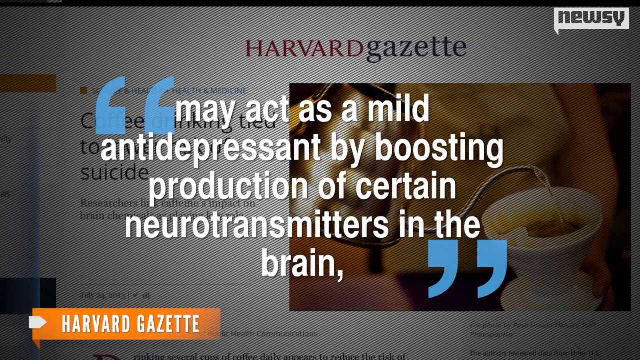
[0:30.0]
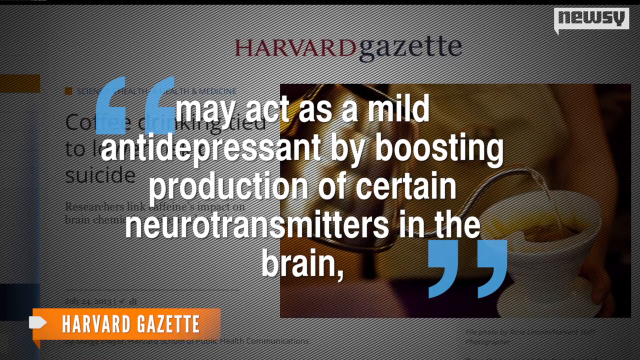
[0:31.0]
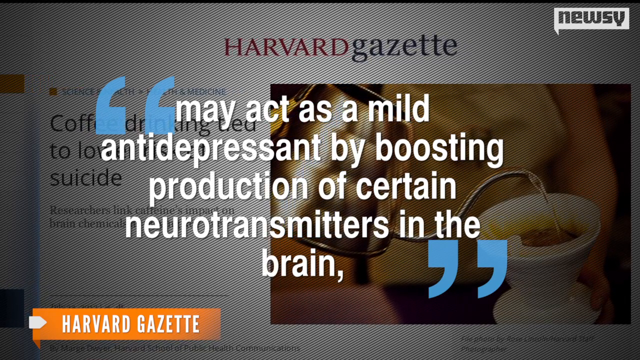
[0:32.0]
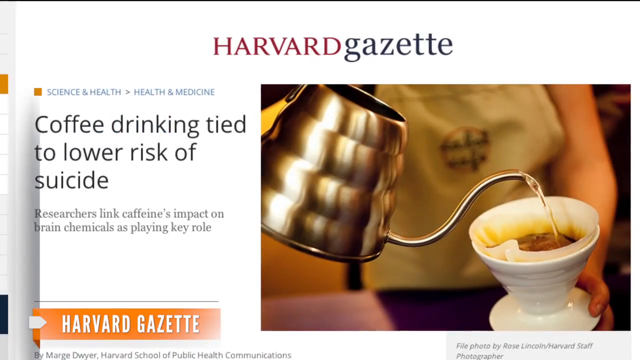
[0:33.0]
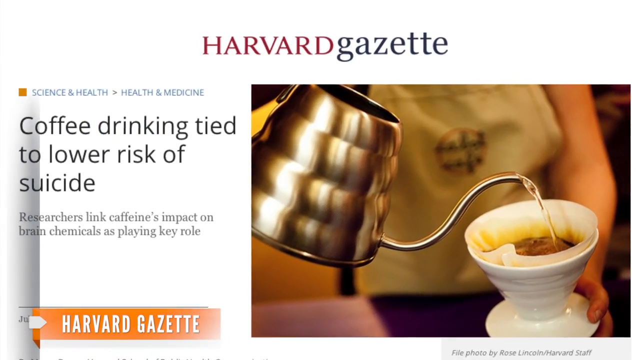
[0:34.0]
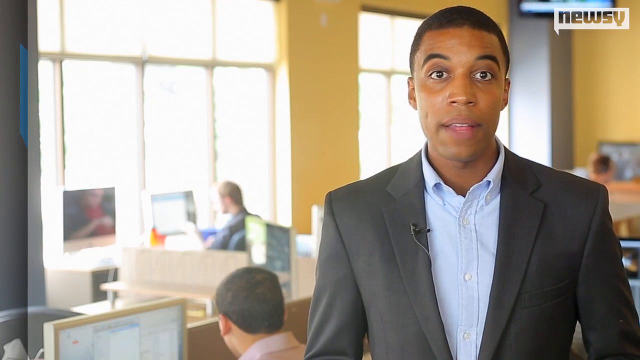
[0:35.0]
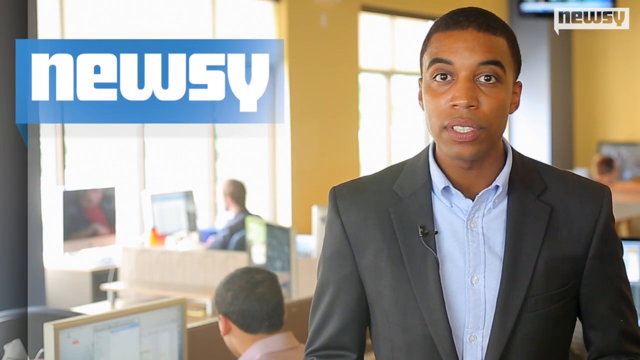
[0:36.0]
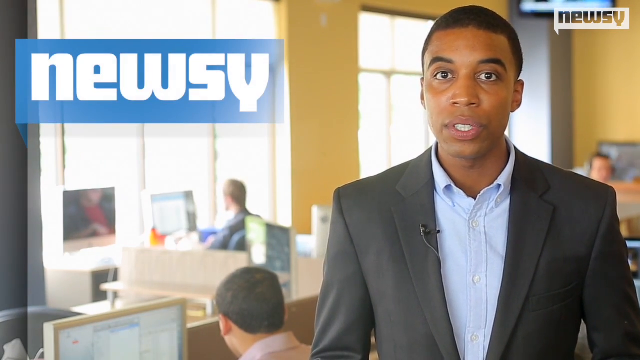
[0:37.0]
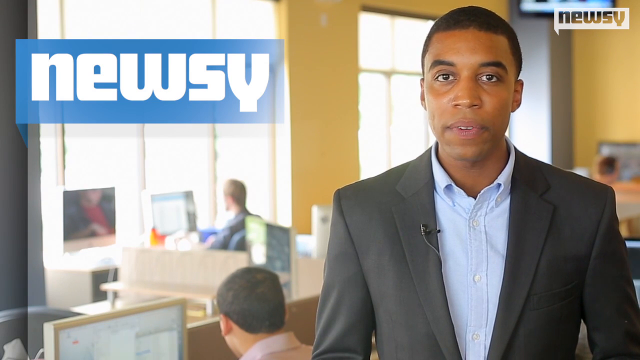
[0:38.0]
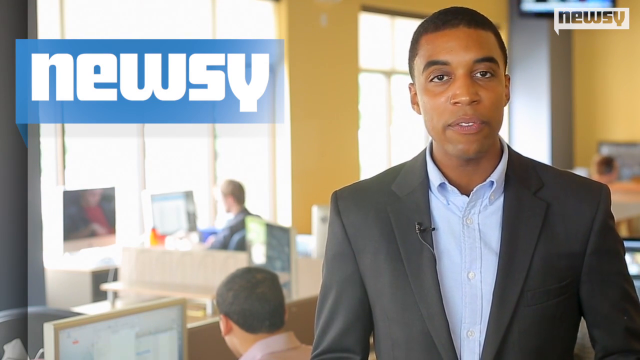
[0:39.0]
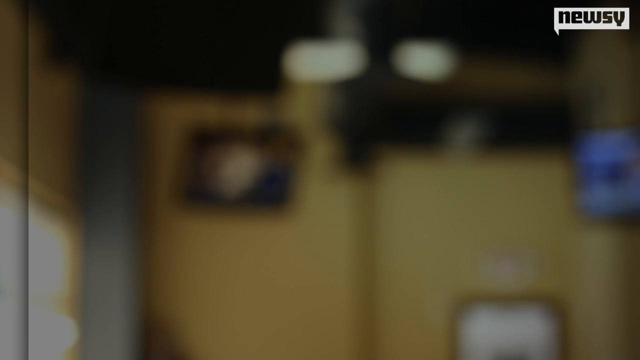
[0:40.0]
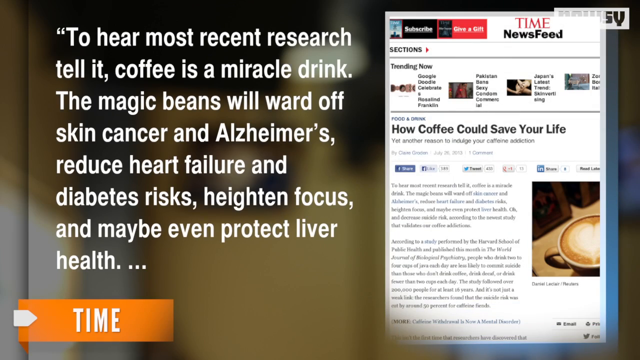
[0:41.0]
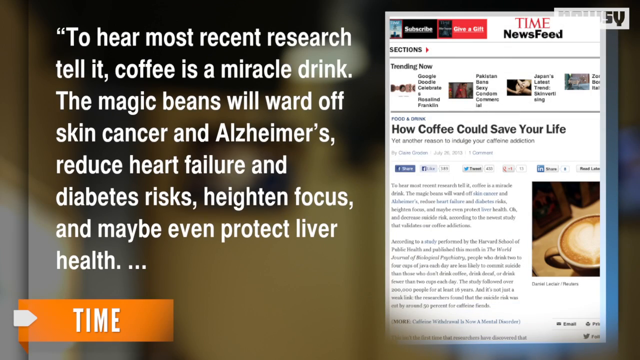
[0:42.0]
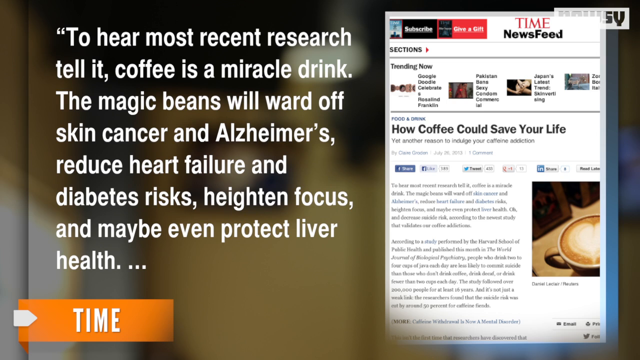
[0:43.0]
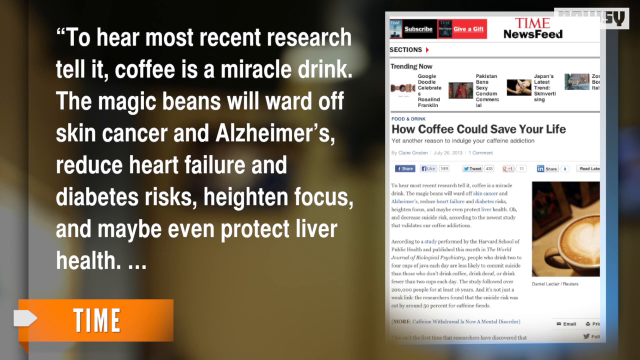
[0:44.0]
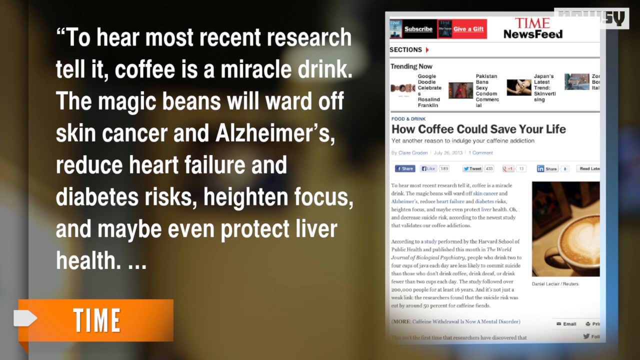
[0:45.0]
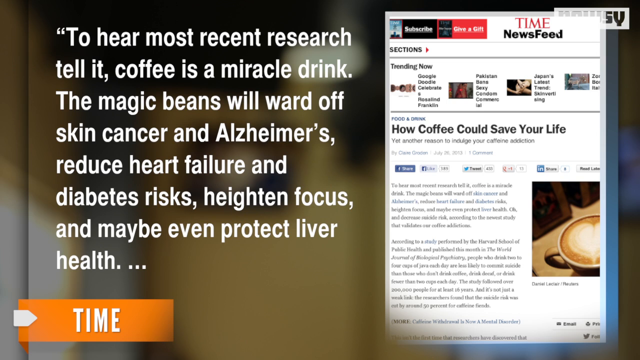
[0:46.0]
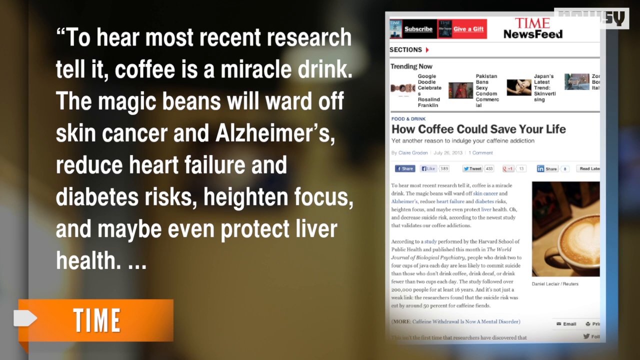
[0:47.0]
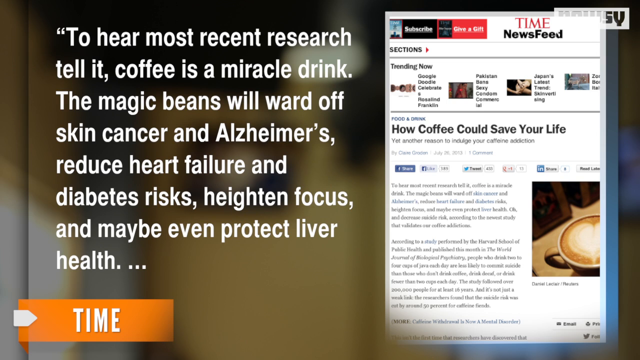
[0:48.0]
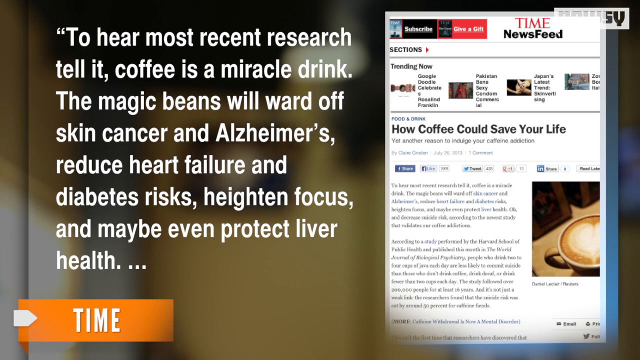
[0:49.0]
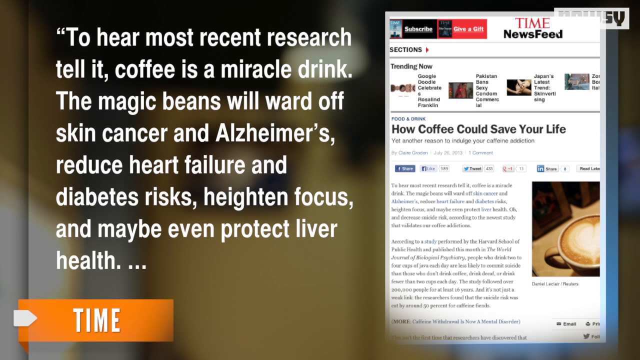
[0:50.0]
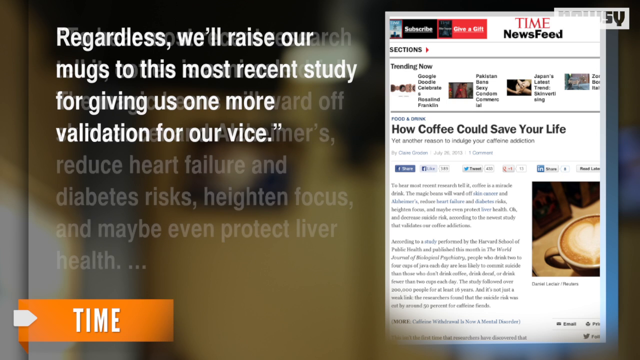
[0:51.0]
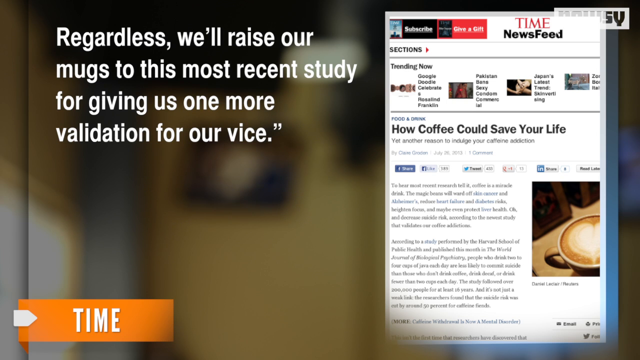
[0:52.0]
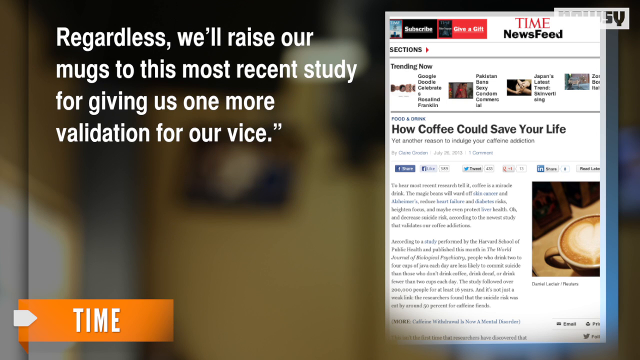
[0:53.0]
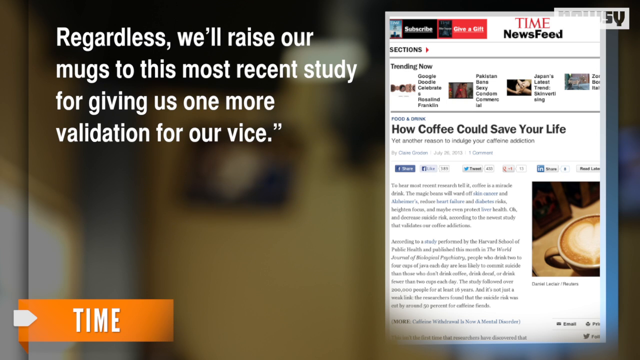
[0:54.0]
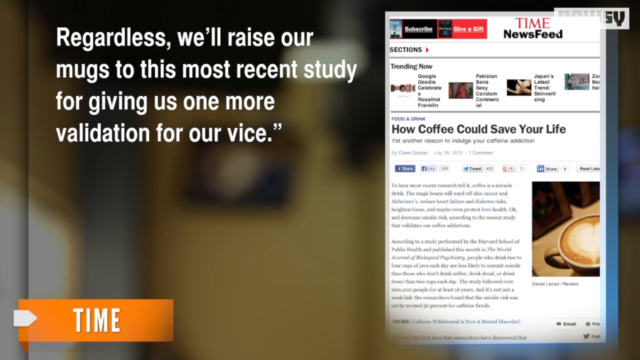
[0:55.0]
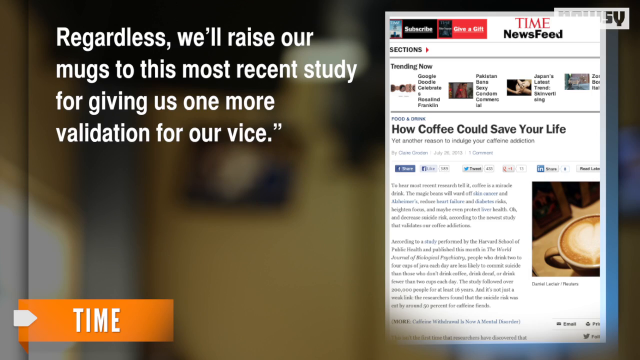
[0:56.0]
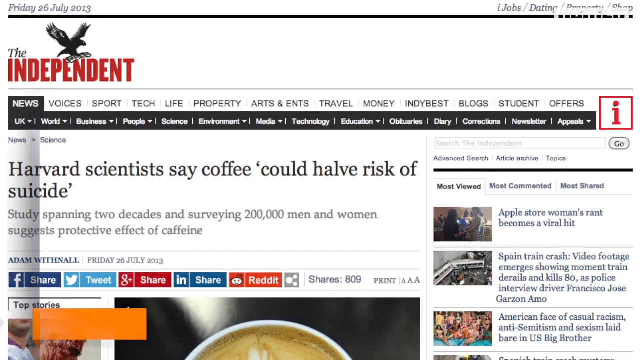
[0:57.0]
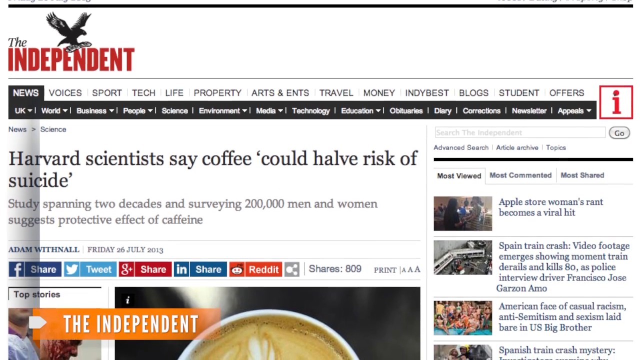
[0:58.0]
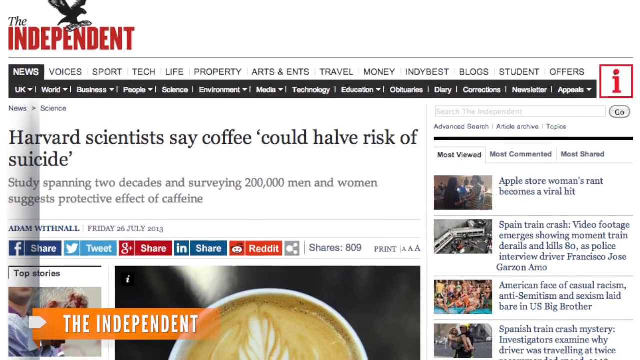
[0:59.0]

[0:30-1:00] A quote from the Harvard Gazette is framed by large blue quote marks at the top and bottom, with white text reading "may act as a mild antidepressant by boosting production of certain neurotransmitters in the brain." A picture shows someone getting some coffee from a fancy tea kettle in the back. The African American anchor is back on the screen, with "Newsy" above his head and to the right. Next, an article from Time Magazine News Feed appears on the right, headlined "how coffee could save your life," with paragraphs of text, and a quote is pulled out on the left in white font: "to hear most recent research tell it, coffee is a miracle drink. The magic beans will ward off skin cancer and Alzheimer's, reduce heart failure and diabetes risks, heighten focus and maybe even protect liver health..." Another quote then pops up reading "regardless, we'll raise our mugs to this most recent study for giving us one more validation for our vice."